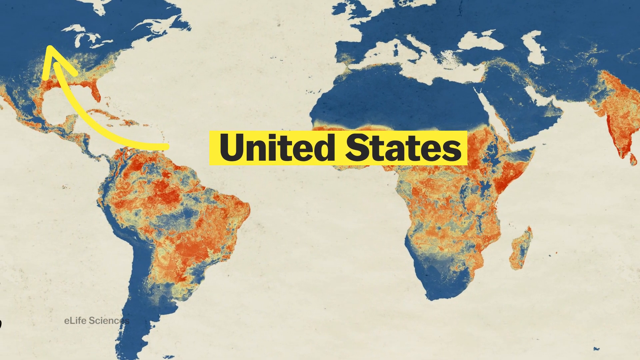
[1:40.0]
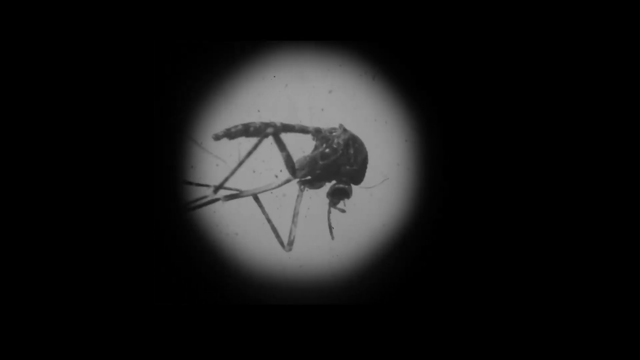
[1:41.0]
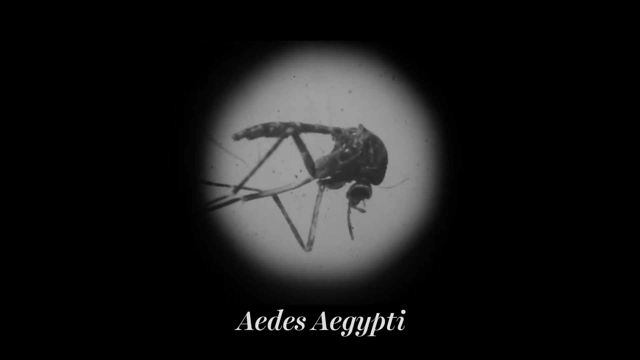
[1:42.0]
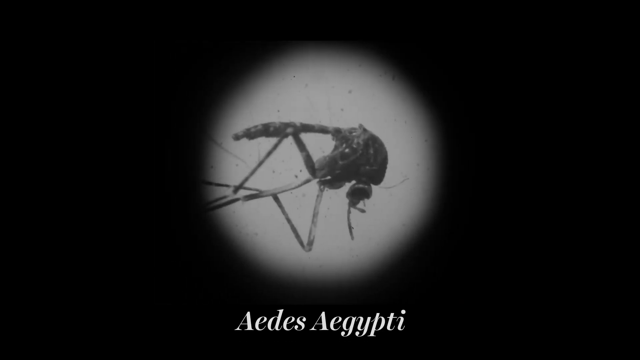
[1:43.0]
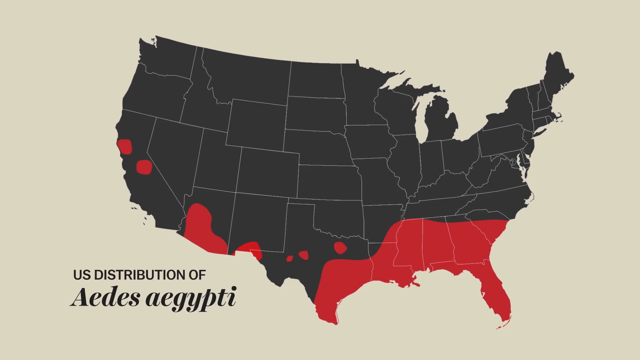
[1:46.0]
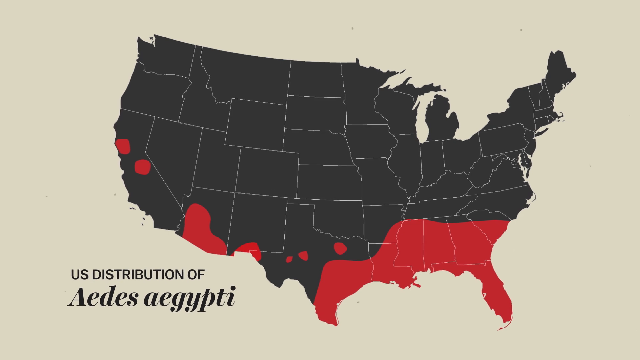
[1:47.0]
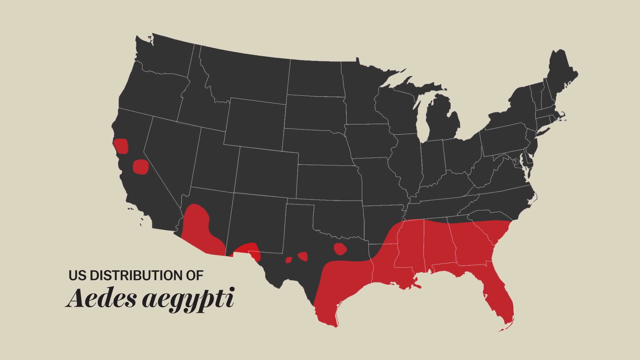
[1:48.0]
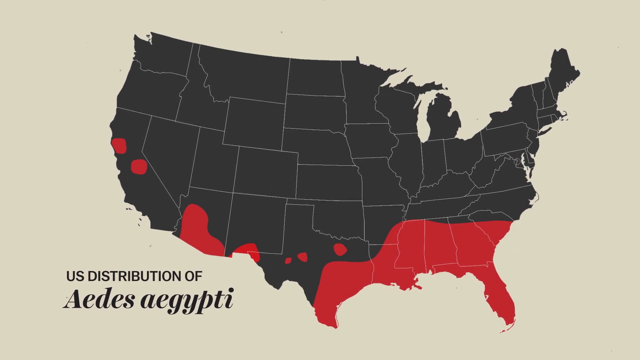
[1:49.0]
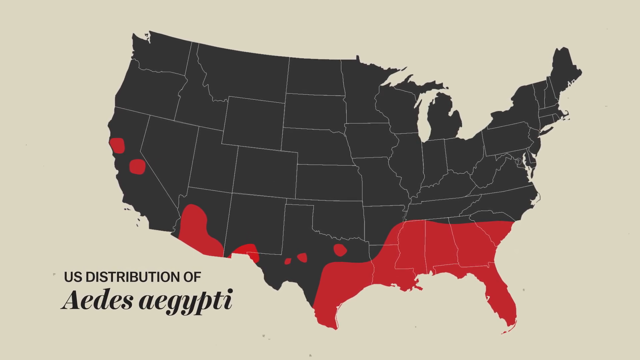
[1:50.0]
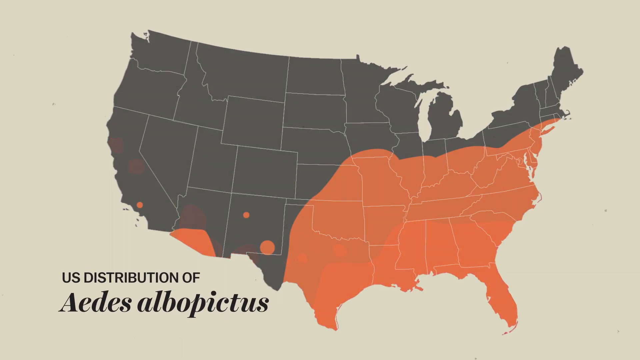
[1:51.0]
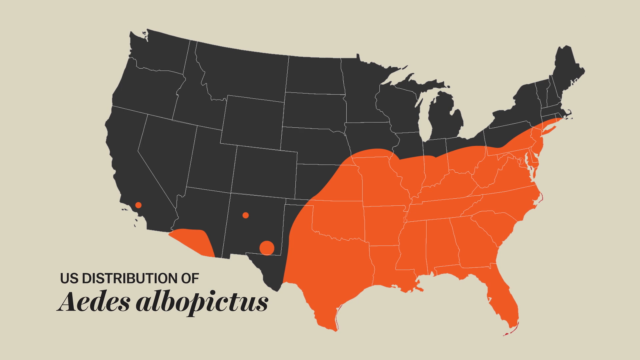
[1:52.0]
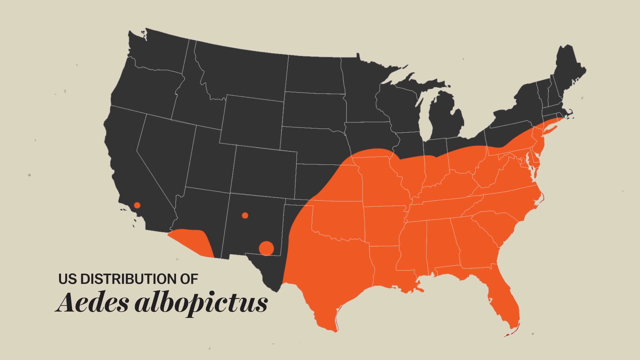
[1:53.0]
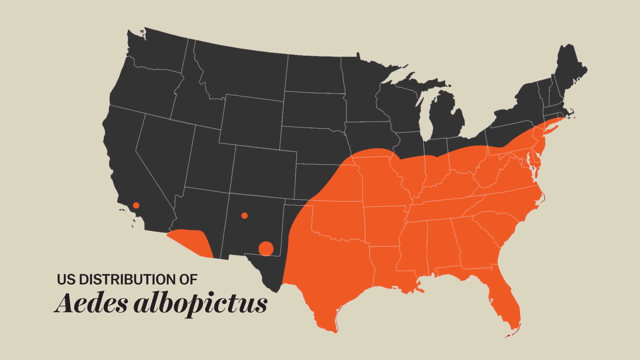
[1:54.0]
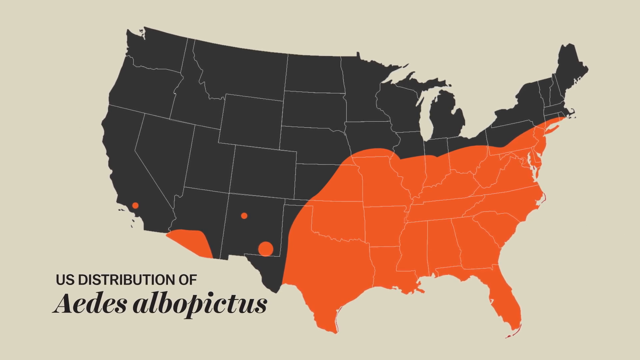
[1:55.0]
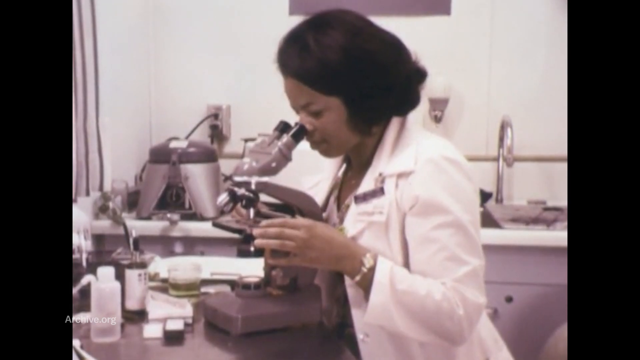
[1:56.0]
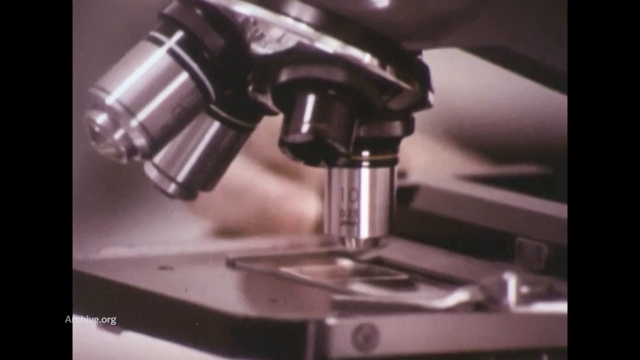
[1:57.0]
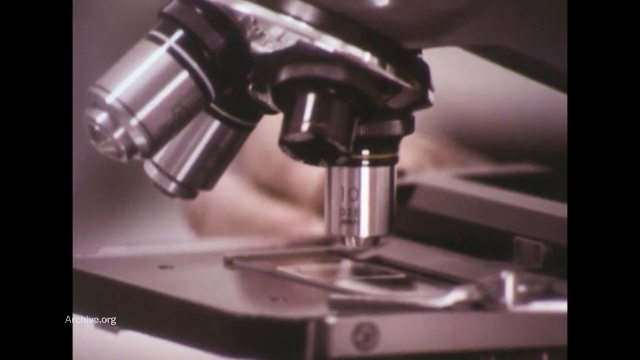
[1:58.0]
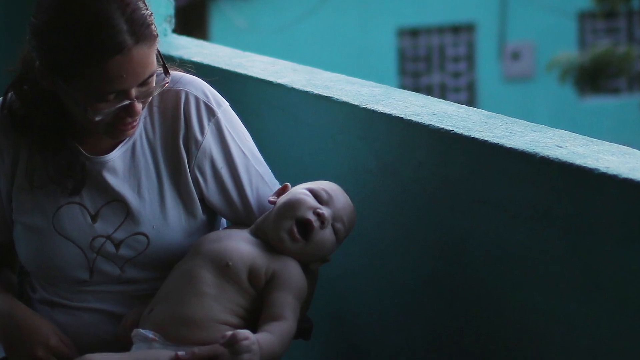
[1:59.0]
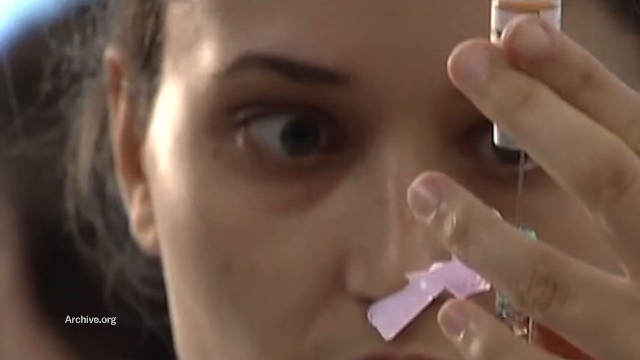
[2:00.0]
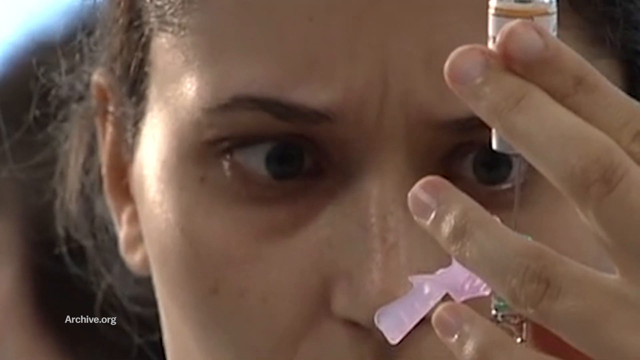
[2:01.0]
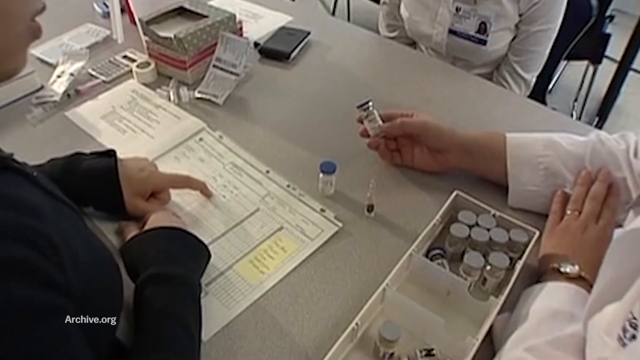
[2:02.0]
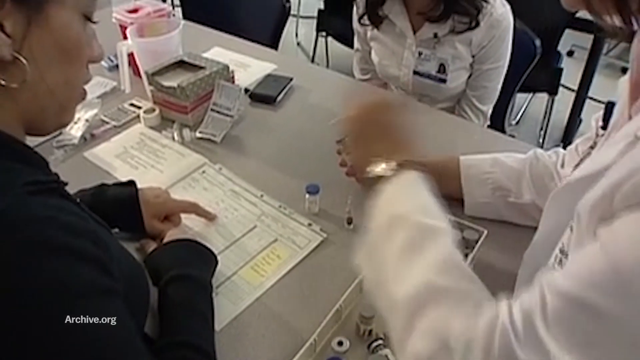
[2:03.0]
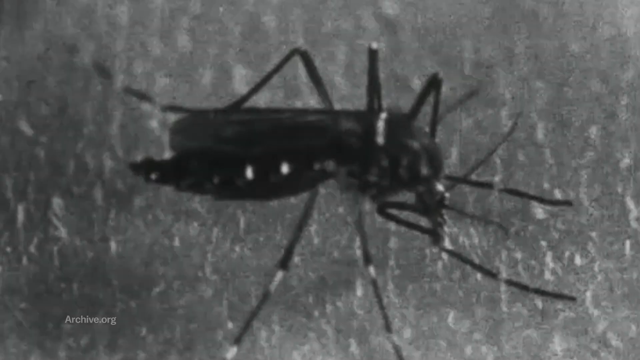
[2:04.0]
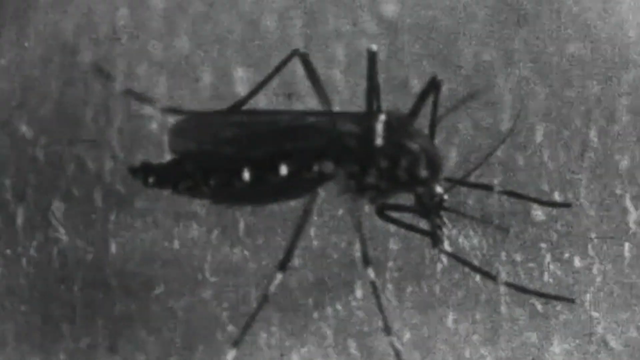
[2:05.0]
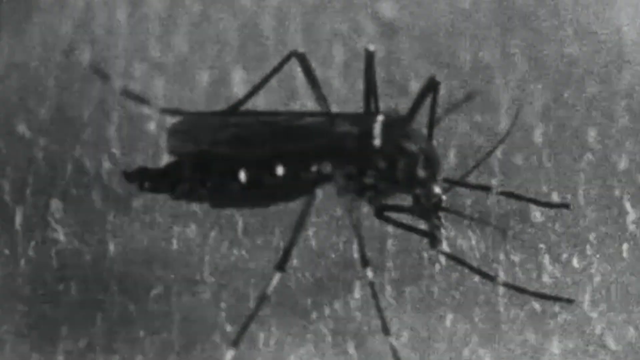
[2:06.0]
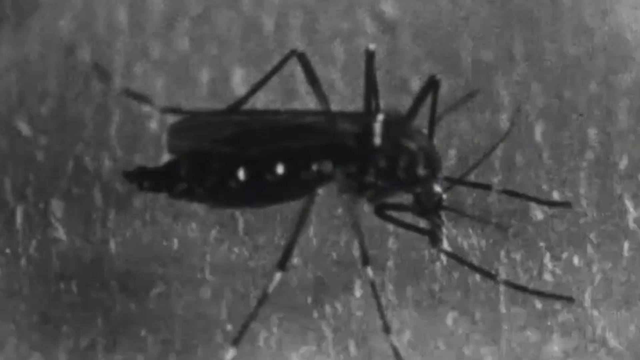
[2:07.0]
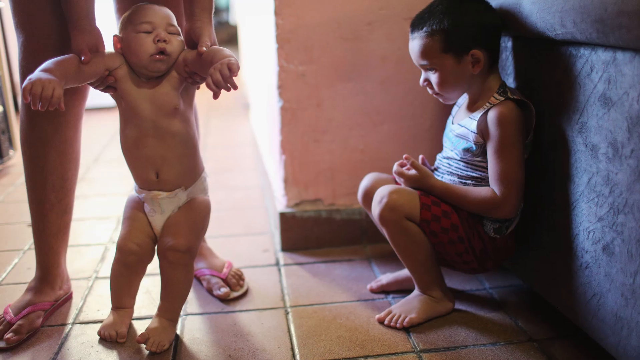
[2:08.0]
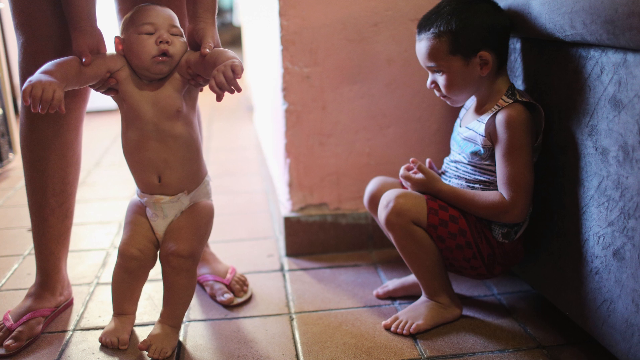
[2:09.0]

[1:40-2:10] A map of the United States shows hot spots of an insect in the south, from Texas across all of Florida, maybe some of the Carolinas, and a few spots in California, covering a big chunk of the southeast United States. Old footage shows a doctor in a lab looking into a microscope while examining samples. People hold a discussion at a table over something that could be a vaccine. The insect is shown again, and then babies in diapers, with a girl to the right.